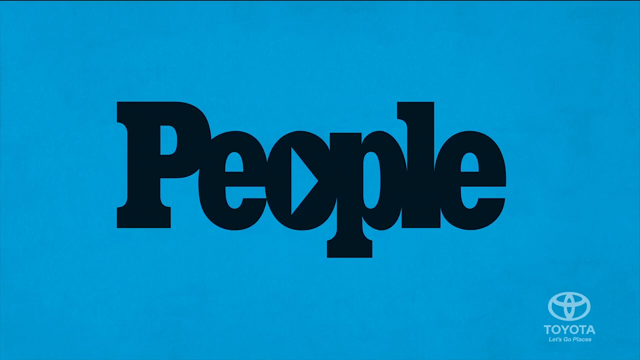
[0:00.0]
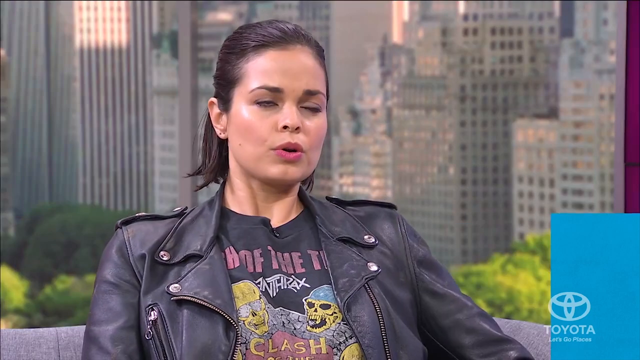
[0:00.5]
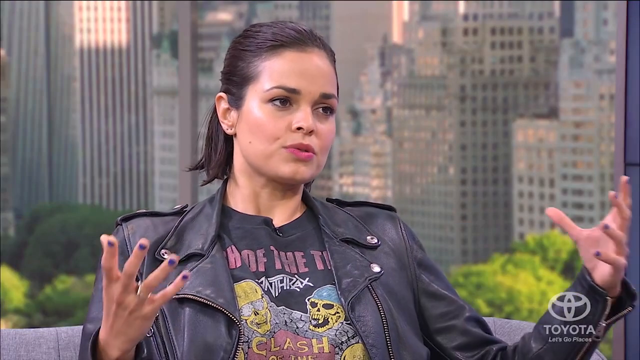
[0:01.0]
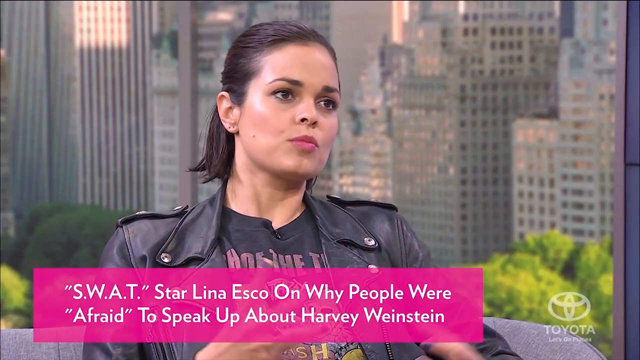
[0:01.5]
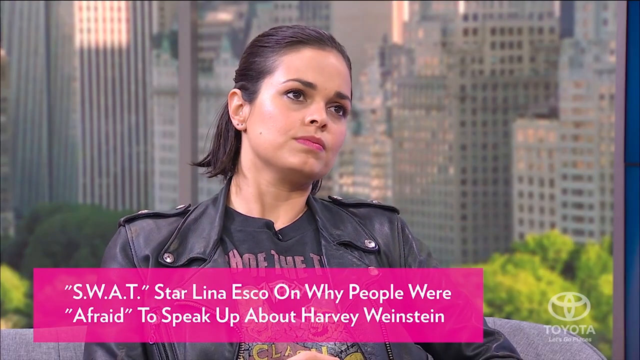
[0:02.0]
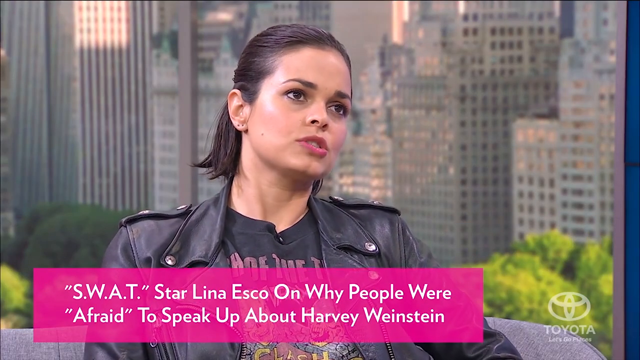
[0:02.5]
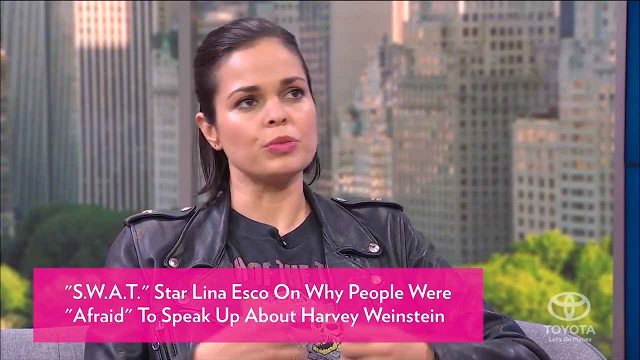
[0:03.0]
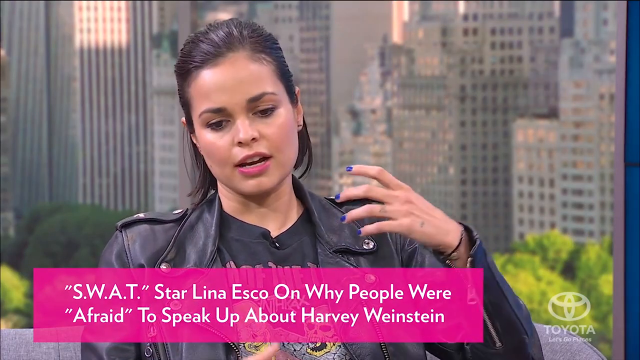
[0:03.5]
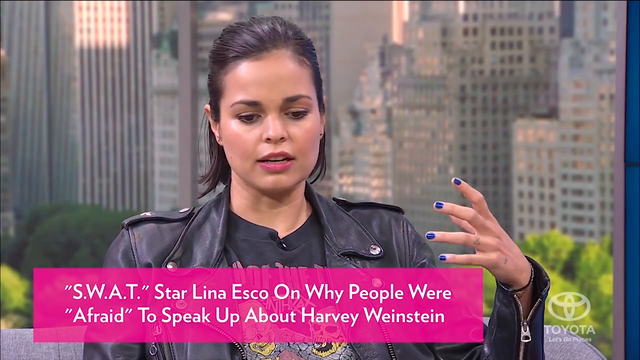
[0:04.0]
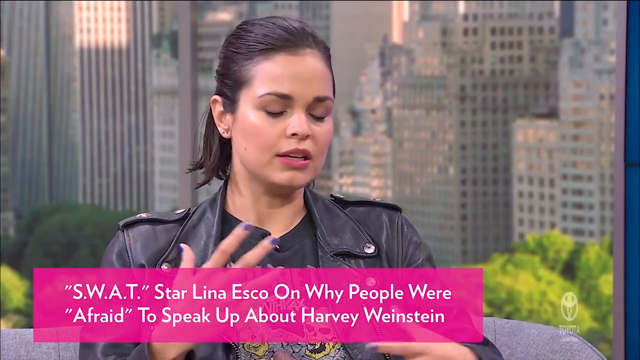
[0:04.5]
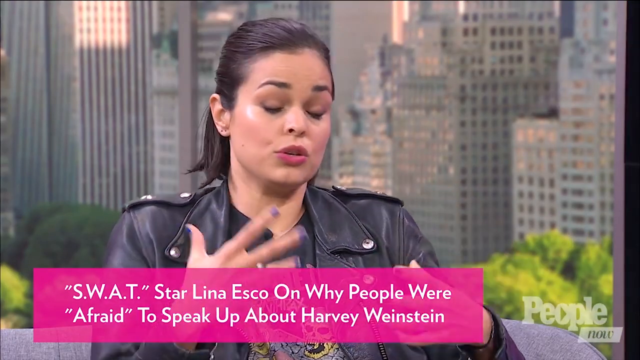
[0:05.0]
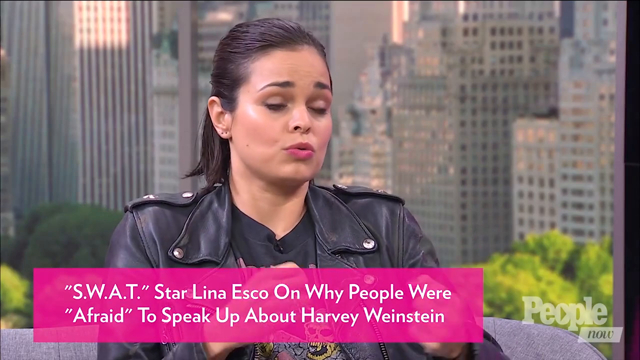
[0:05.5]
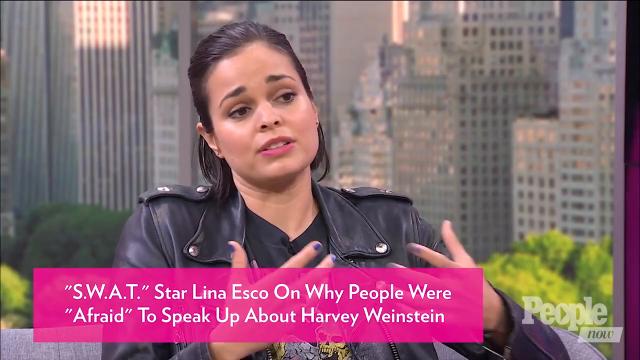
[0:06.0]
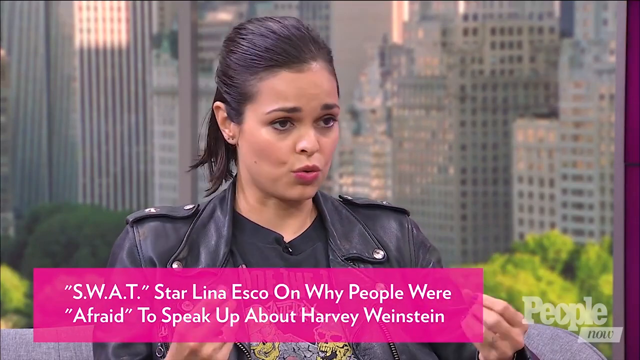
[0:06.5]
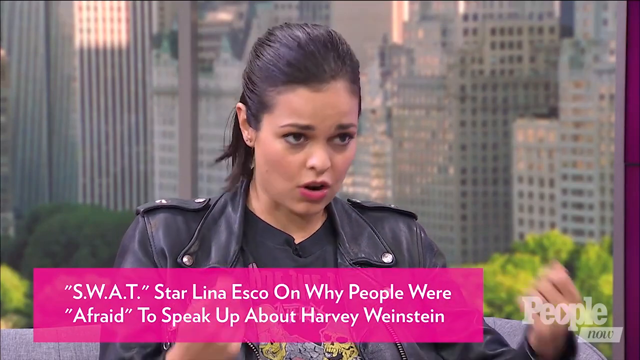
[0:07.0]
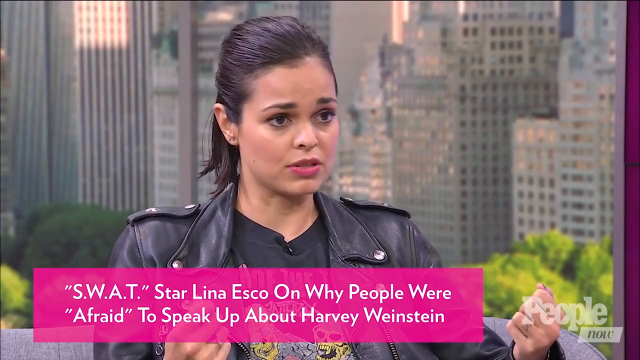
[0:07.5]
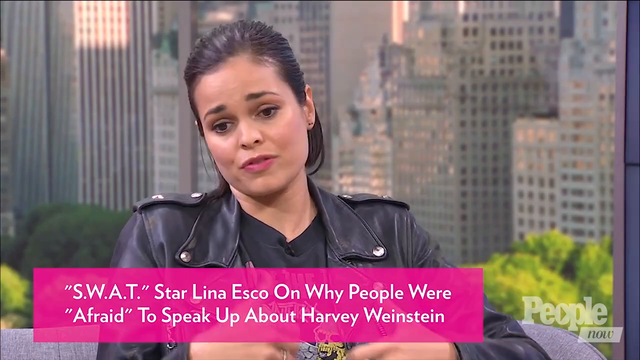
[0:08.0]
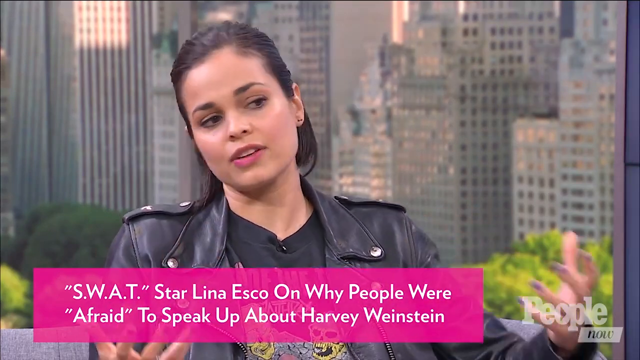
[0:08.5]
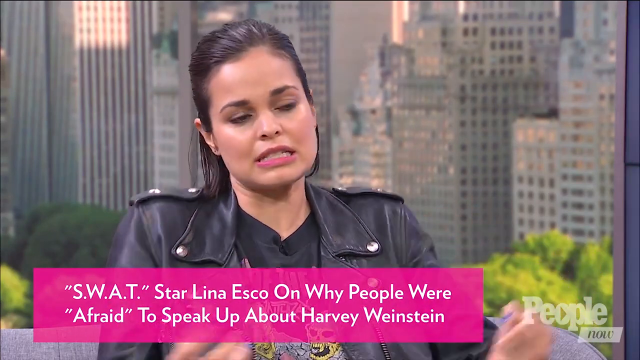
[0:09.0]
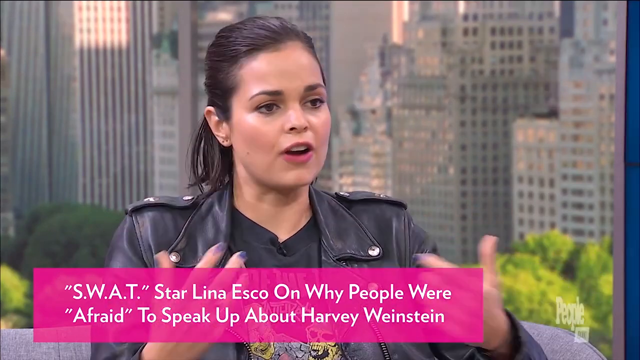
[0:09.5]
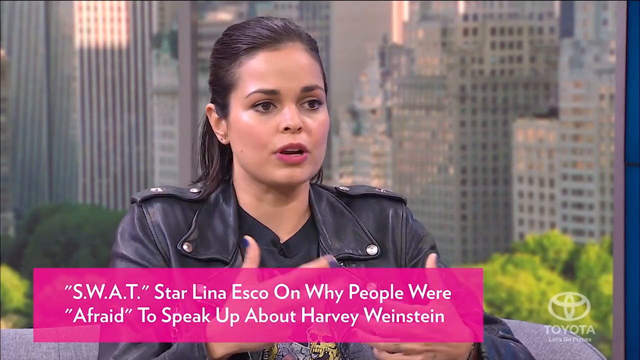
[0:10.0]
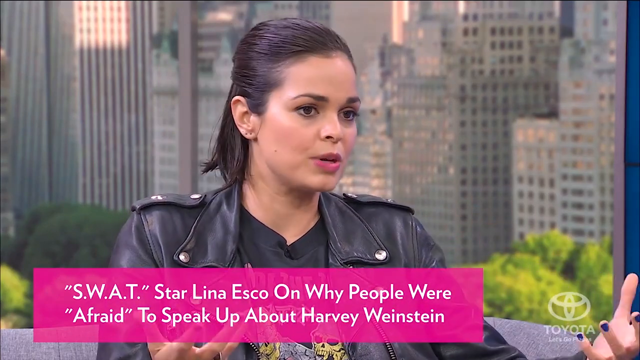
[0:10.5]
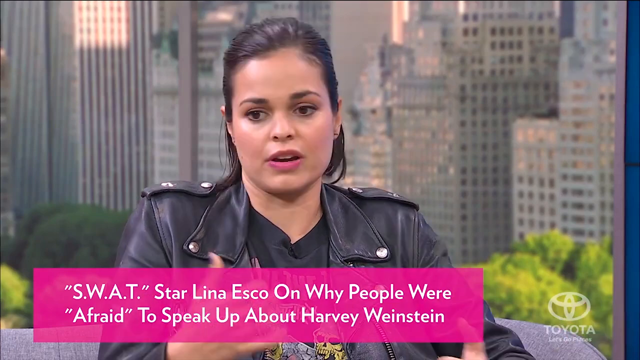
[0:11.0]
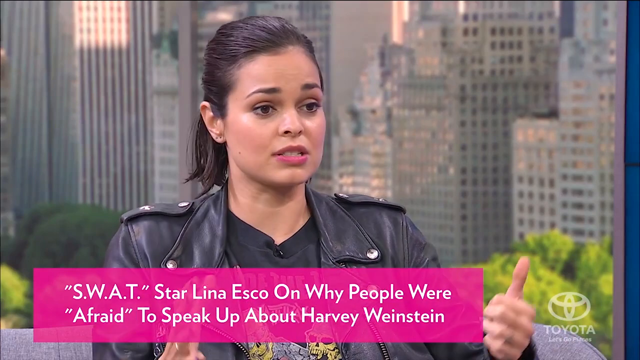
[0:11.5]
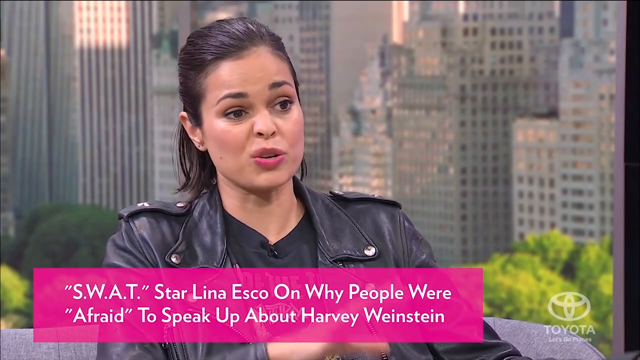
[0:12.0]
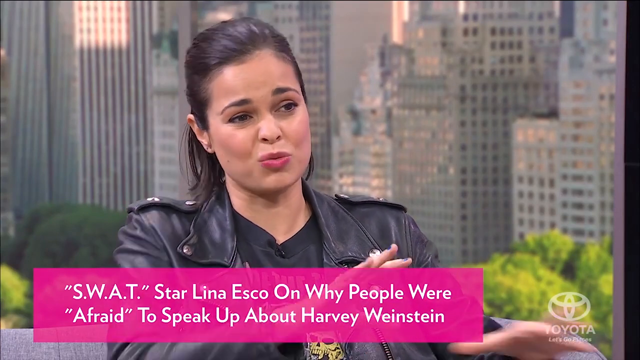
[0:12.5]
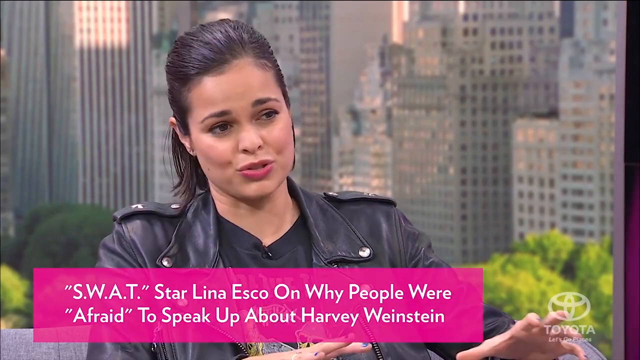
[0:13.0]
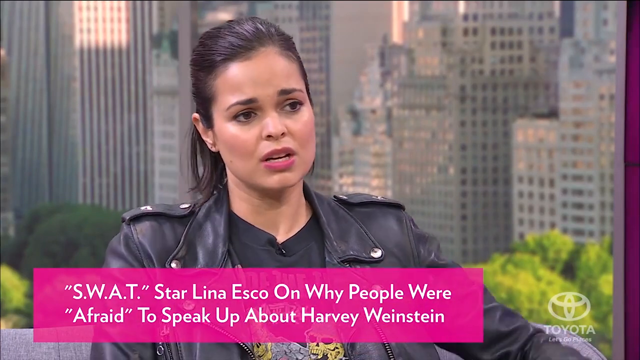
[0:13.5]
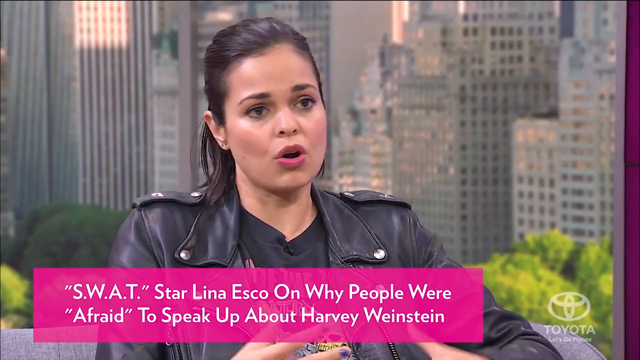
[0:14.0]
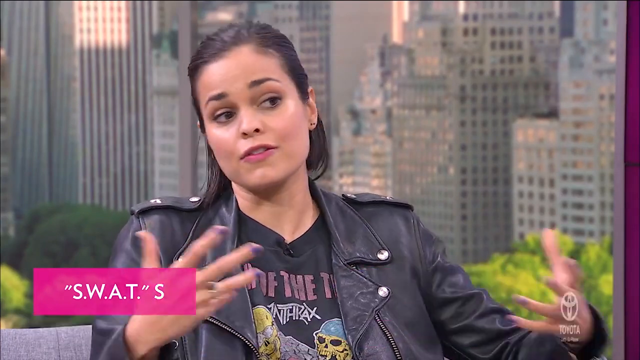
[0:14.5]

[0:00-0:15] A talk show-style interview features an actress named Lena. A caption at the bottom reads "Swat Lina Esco on why people were afraid to speak up". She is white with black hair and wears a t-shirt with a leather jacket on top. Her nails are painted with purple nail polish, and she talks while making a lot of movements with her hands. On the far right side, "Toyota" and "People" are visible, suggesting the show is probably sponsored by Toyota.